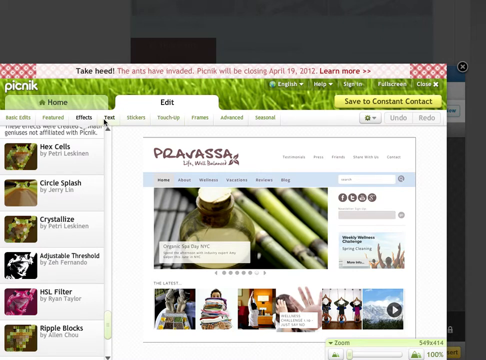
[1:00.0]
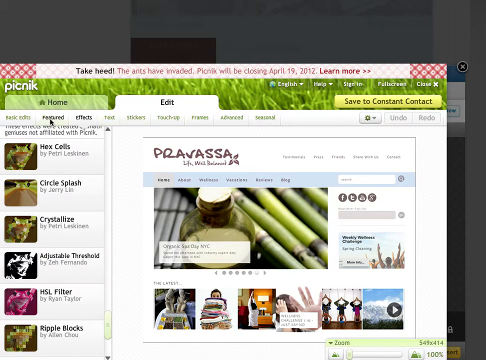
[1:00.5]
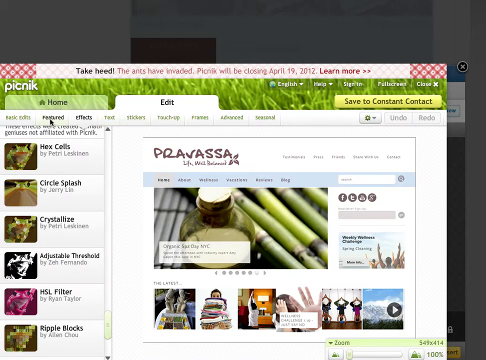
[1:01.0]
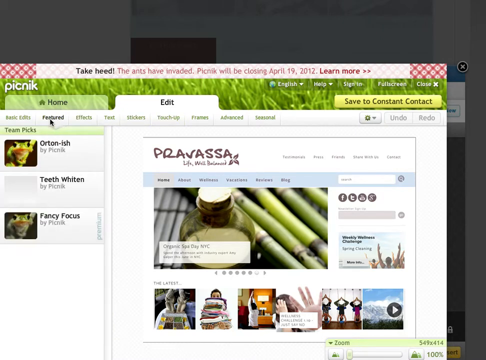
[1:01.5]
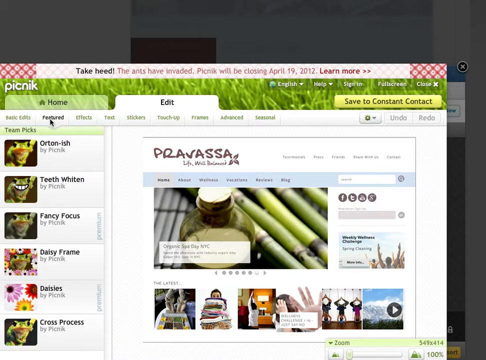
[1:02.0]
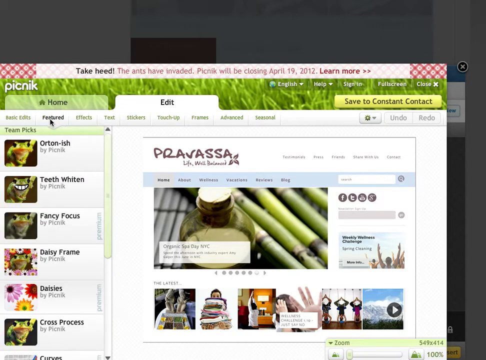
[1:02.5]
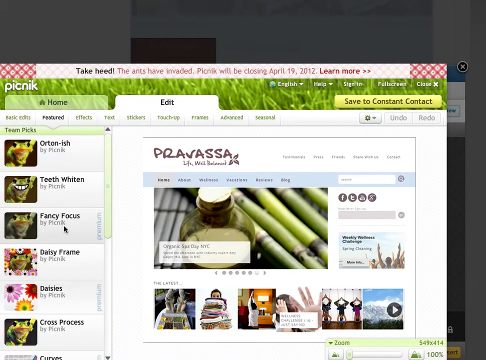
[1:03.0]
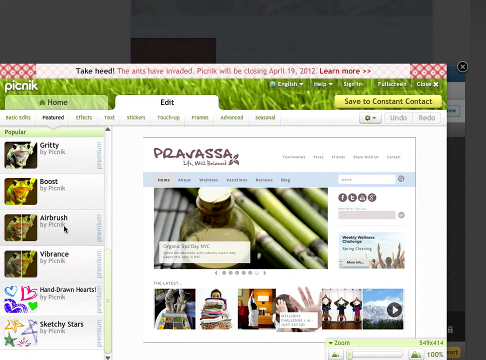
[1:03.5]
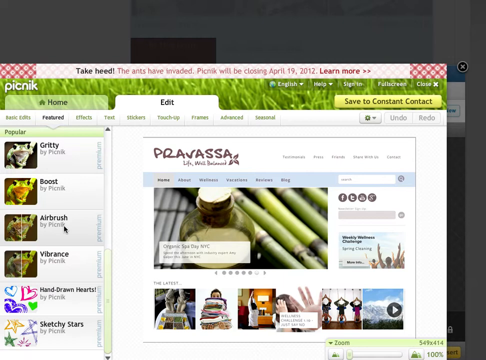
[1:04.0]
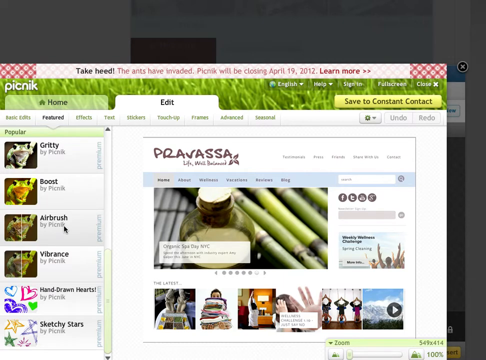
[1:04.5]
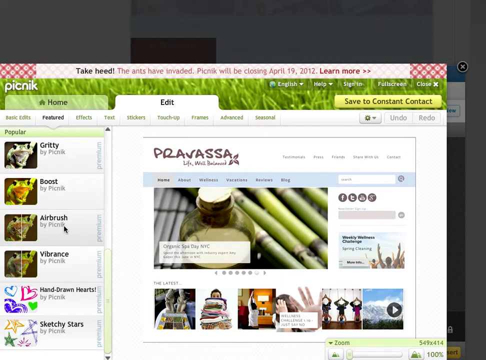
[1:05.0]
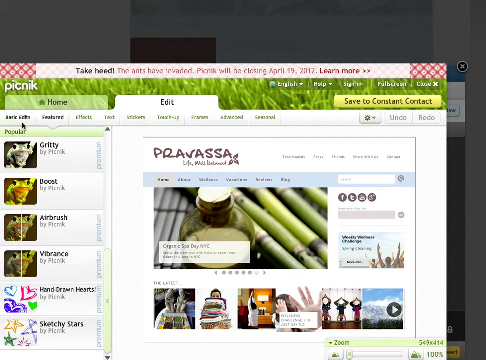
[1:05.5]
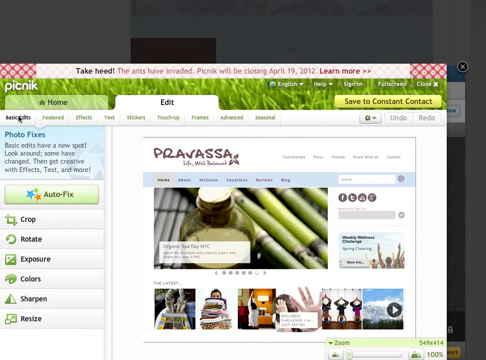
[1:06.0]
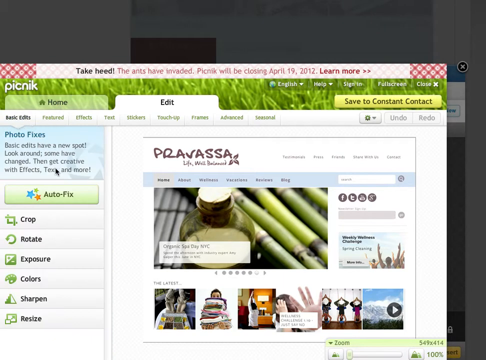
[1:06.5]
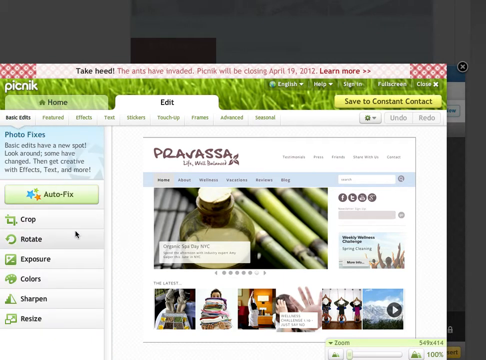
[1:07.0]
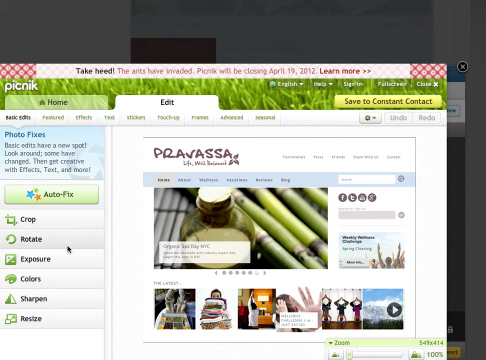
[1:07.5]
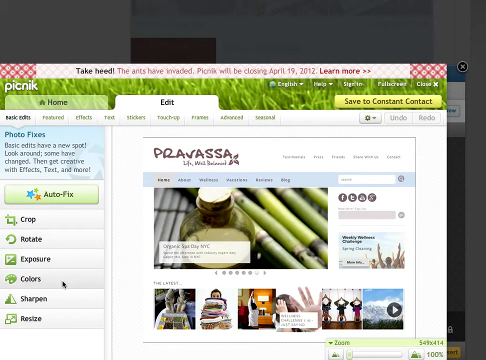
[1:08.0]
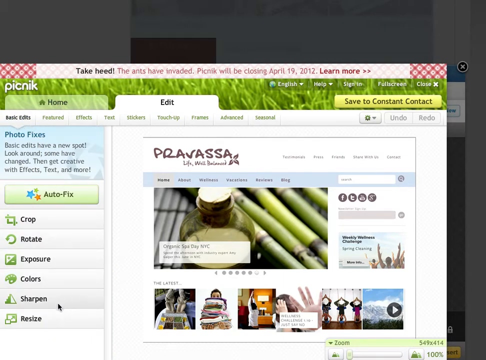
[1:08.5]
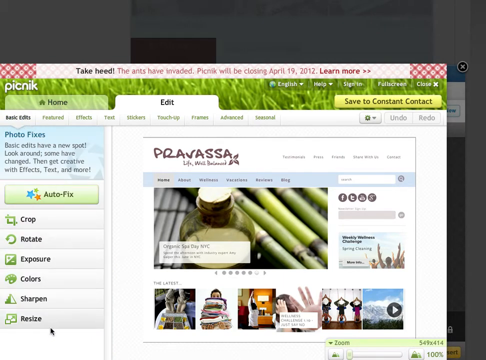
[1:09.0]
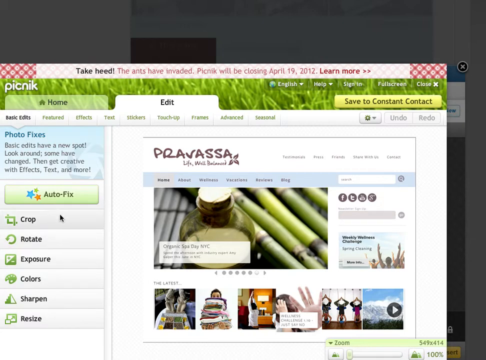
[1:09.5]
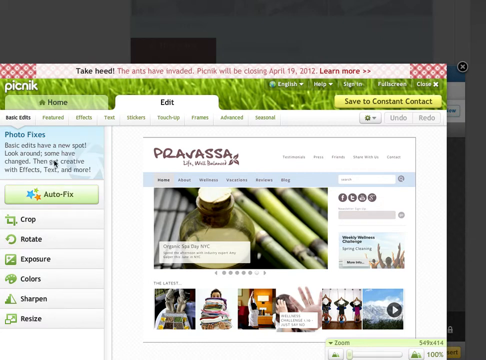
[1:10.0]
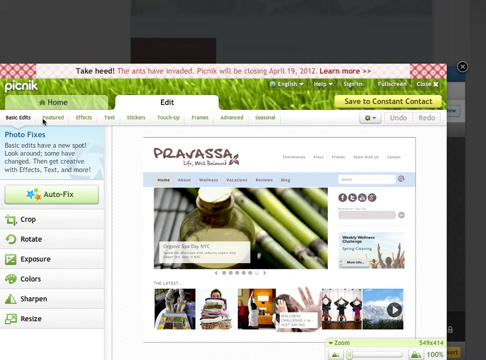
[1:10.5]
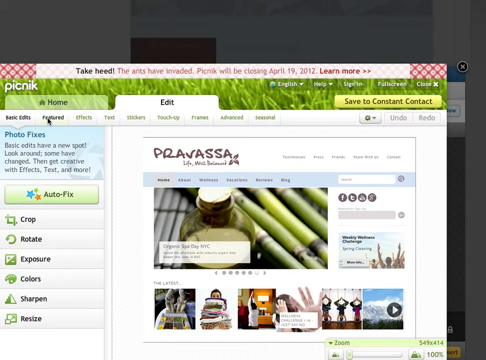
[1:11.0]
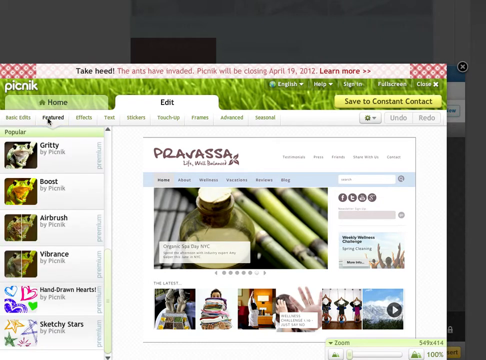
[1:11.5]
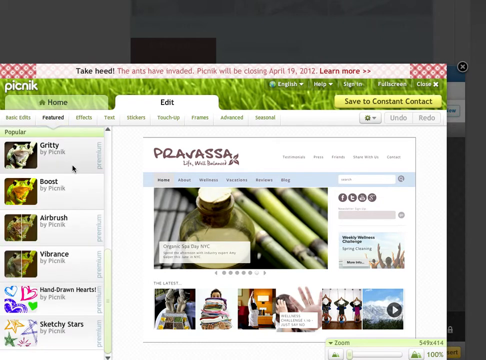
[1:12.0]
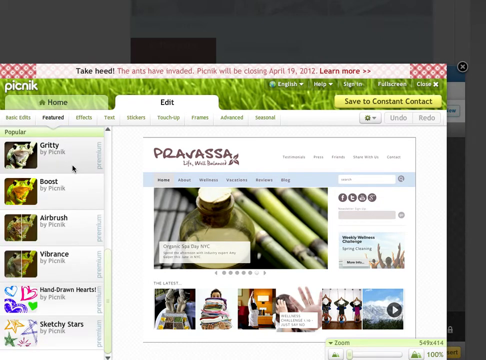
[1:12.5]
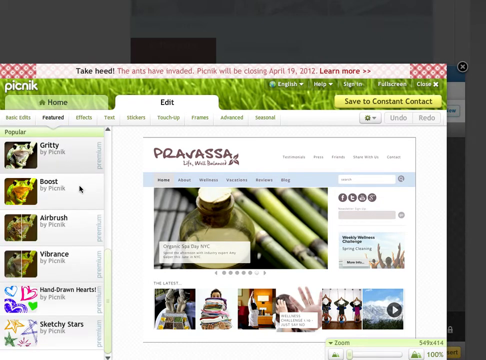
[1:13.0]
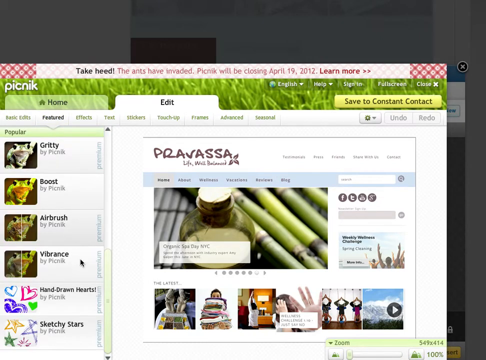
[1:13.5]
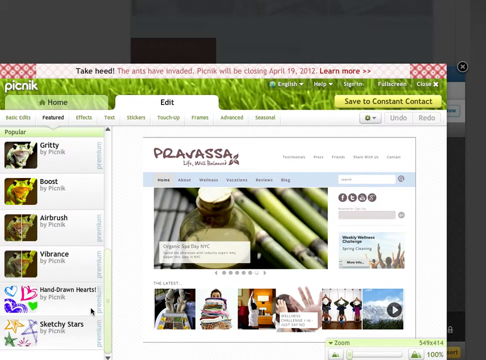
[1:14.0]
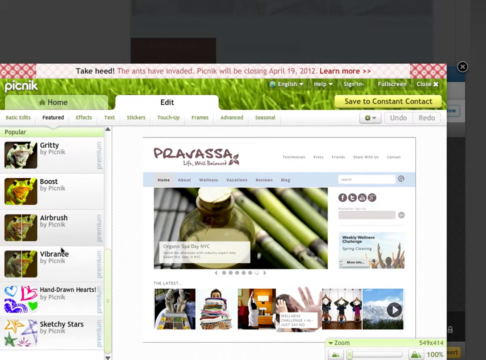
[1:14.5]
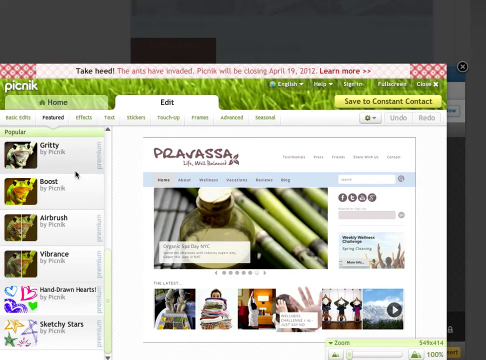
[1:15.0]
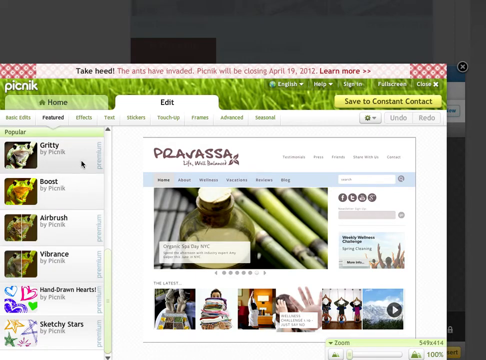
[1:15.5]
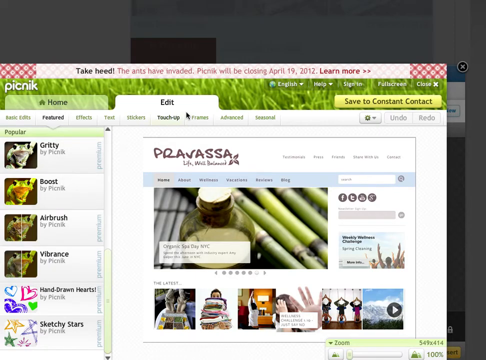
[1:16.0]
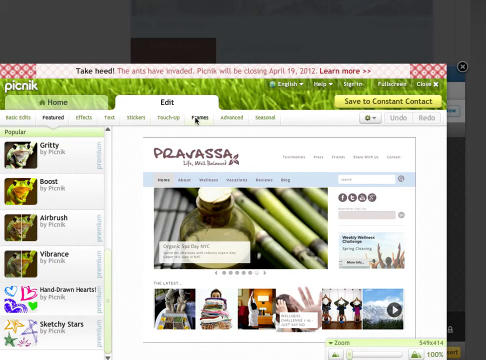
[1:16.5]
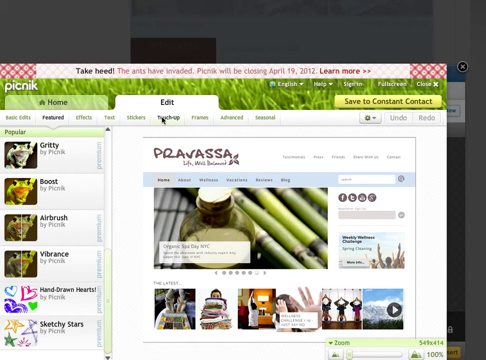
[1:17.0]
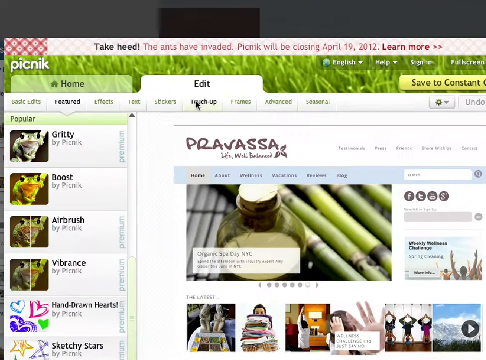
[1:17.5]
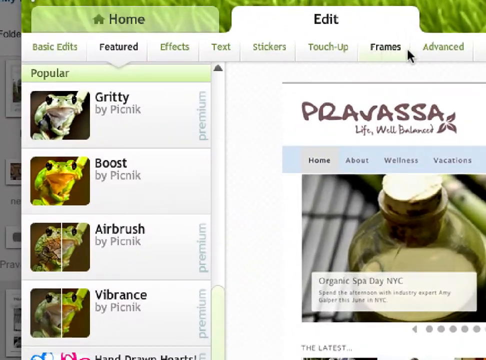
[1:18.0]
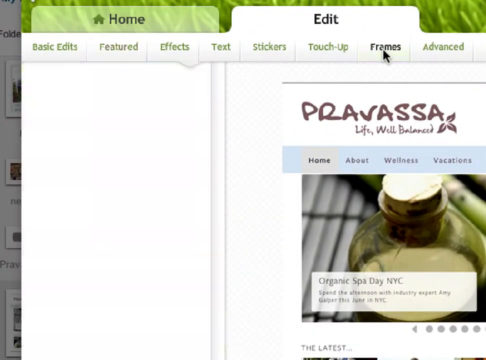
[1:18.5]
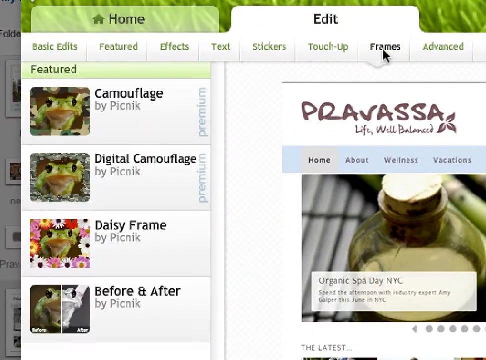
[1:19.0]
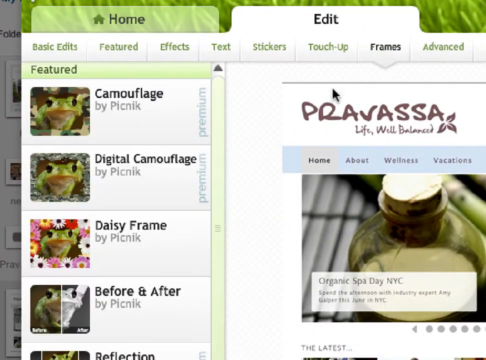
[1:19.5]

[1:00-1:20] A smaller screen appears on the computer, an inch from the top of the main screen and half an inch from the right. The main screen in the backdrop has multiple grayed-out colors, and the very right corner of a previous screen with a little black X is visible. The screen shows that the edit area is open, and under edit, featured has been brought up by the person using an arrow mouse pointer. It says "Provosto". On the left, the mouse scrolls down through multiple clickable areas, which look airbrushed and vibrant. The person goes up and clicks basic edit, and another side screen pops up. They scroll up the drop-down window, click the word featured, come down and look at the different features. Then they click frames, and the side panel comes up and enlarges. On the right, Provosto is still shown, with a picture of bamboo and a bottle with a cork in it.